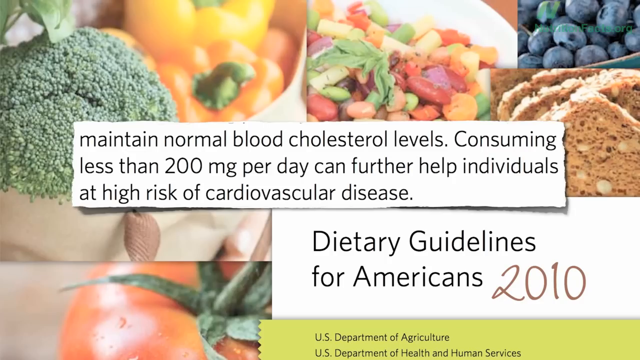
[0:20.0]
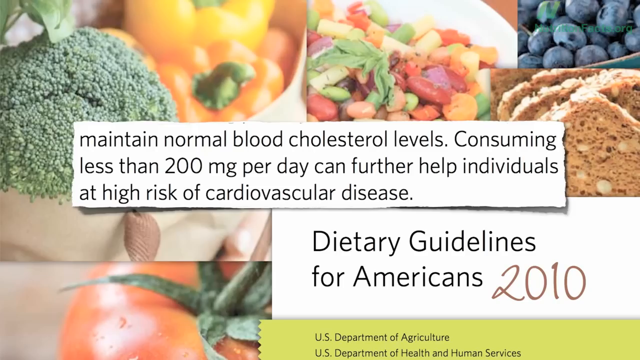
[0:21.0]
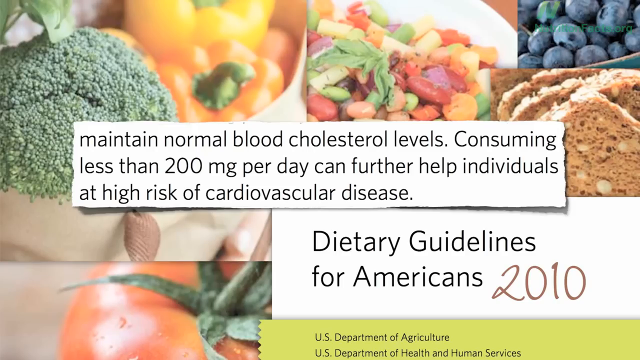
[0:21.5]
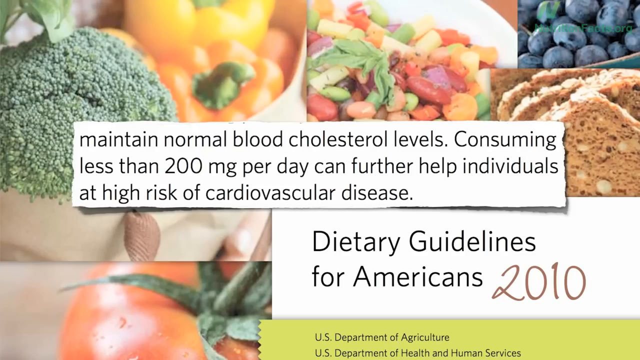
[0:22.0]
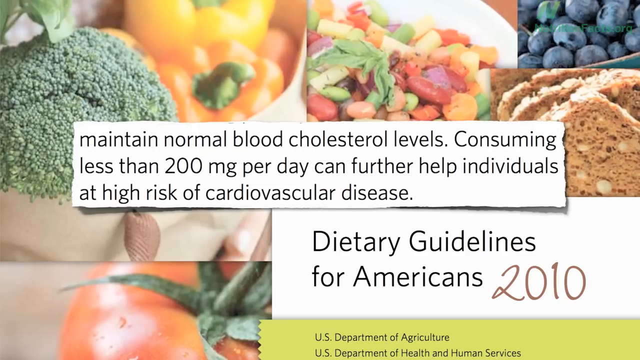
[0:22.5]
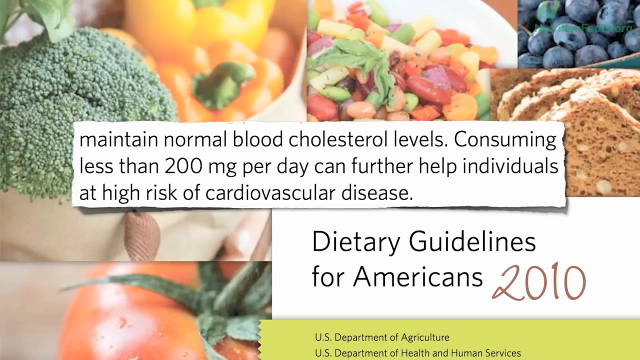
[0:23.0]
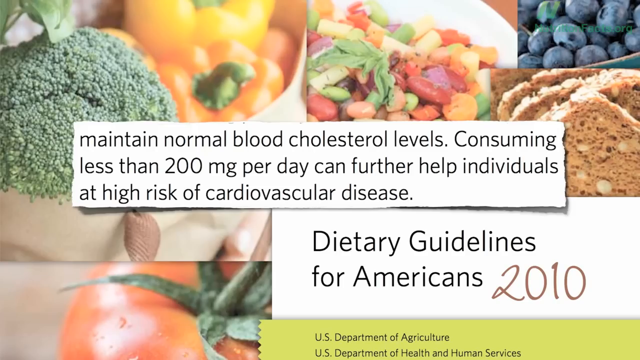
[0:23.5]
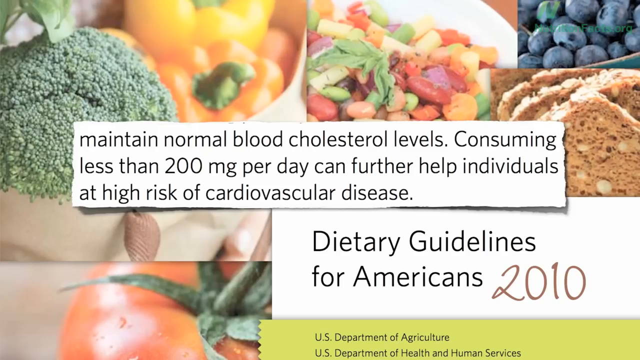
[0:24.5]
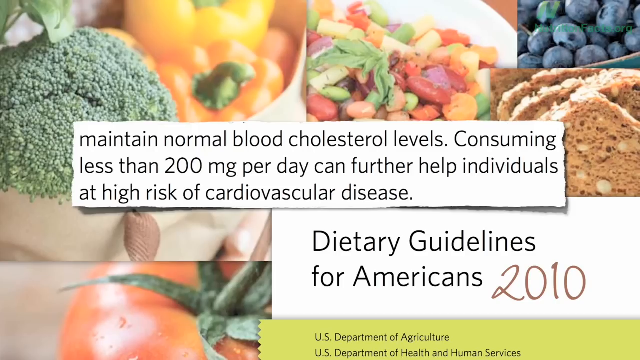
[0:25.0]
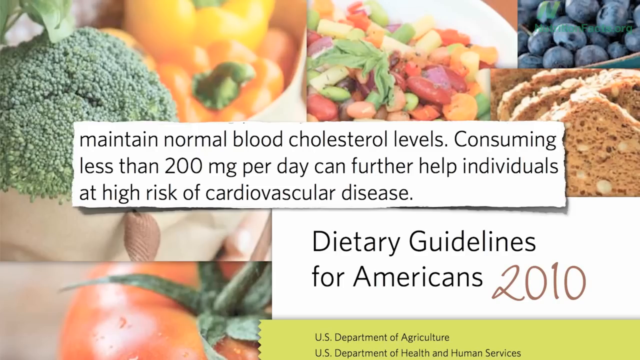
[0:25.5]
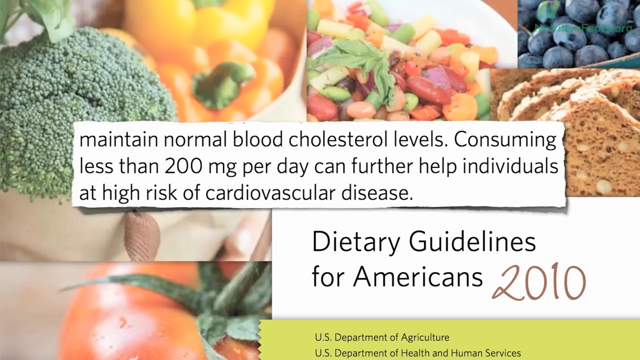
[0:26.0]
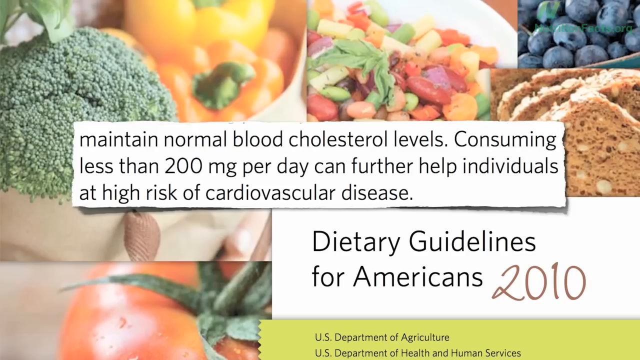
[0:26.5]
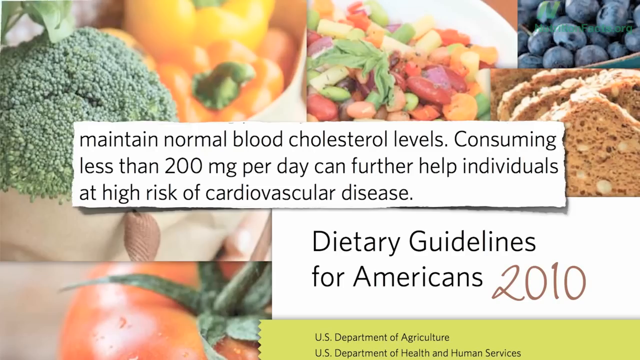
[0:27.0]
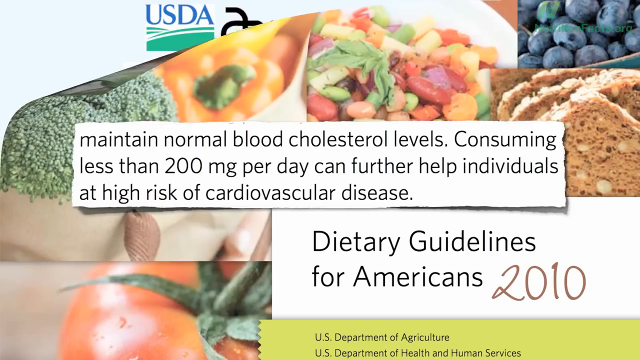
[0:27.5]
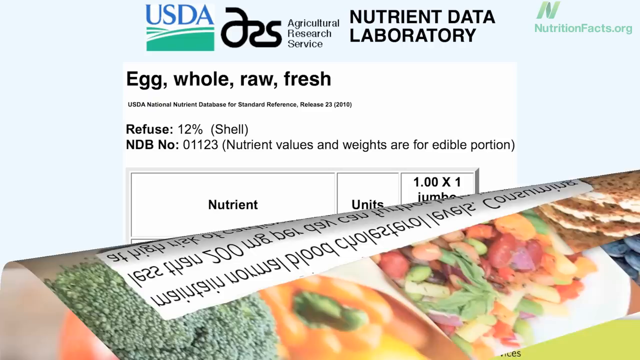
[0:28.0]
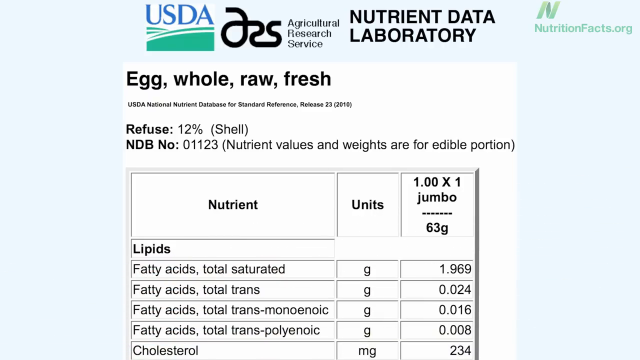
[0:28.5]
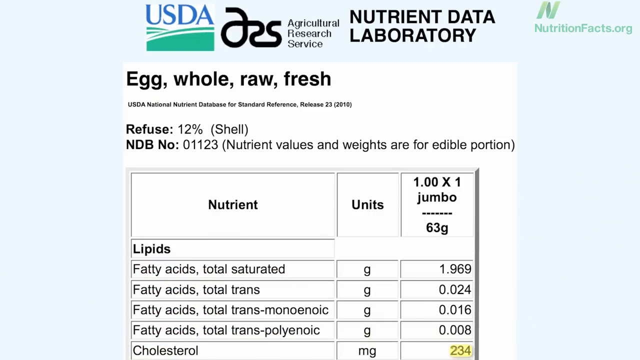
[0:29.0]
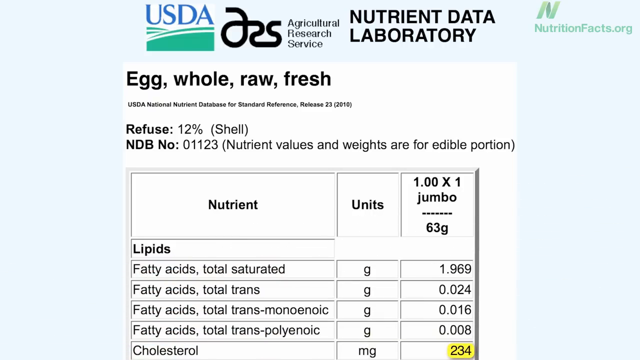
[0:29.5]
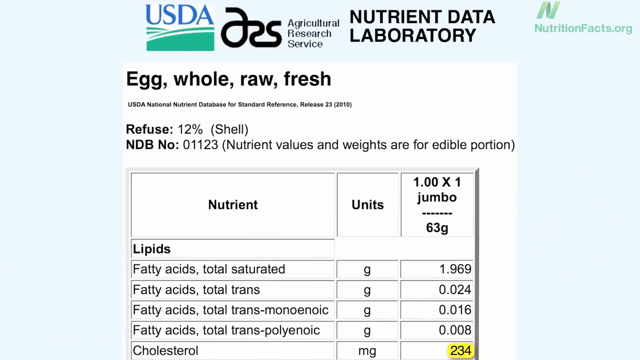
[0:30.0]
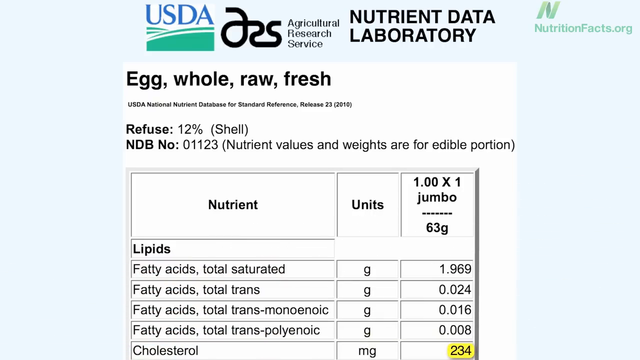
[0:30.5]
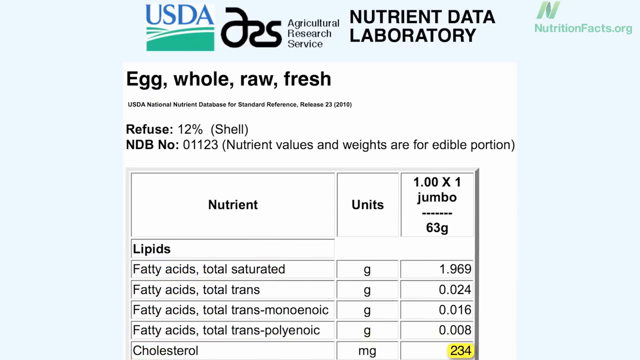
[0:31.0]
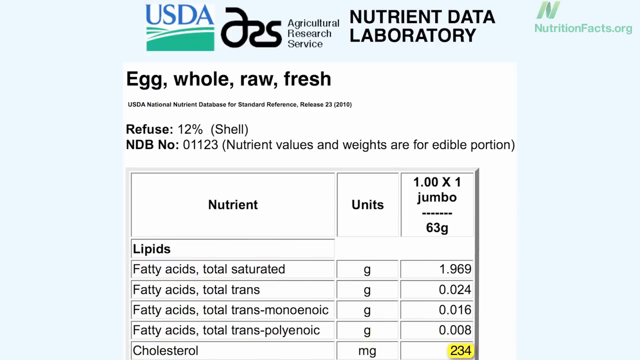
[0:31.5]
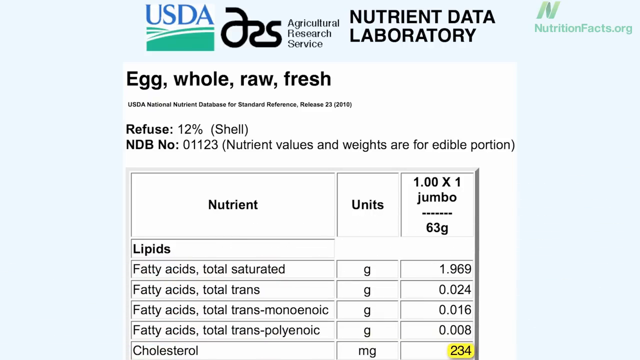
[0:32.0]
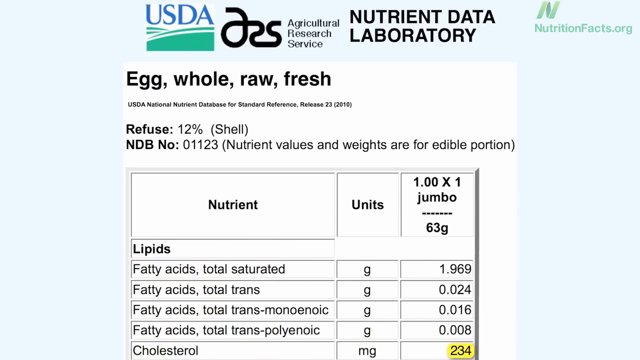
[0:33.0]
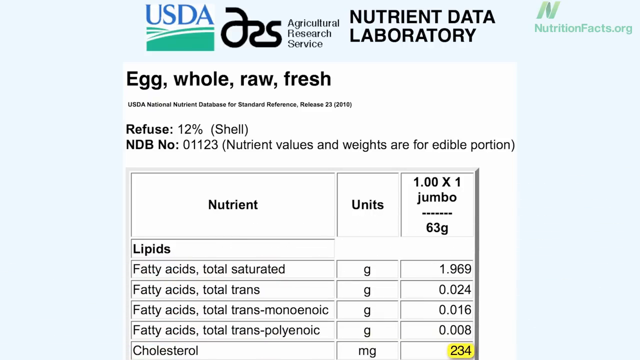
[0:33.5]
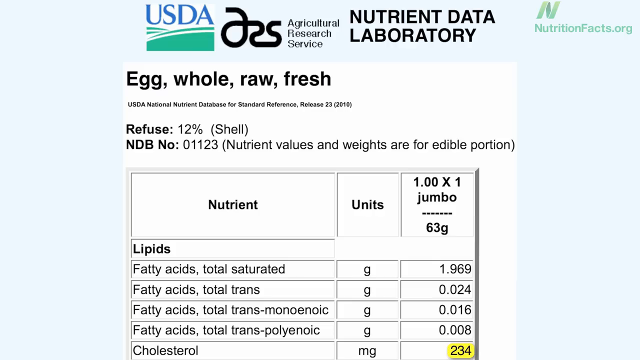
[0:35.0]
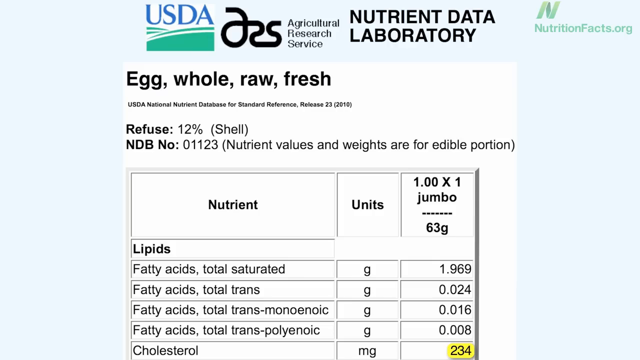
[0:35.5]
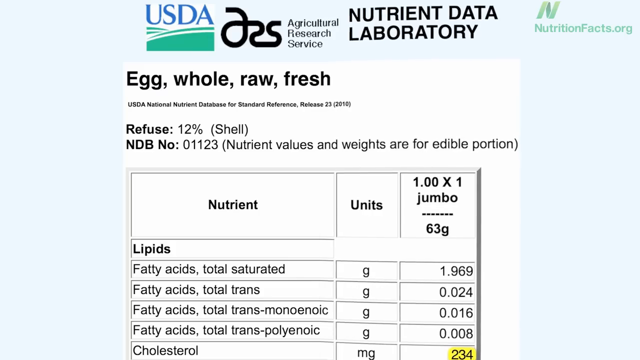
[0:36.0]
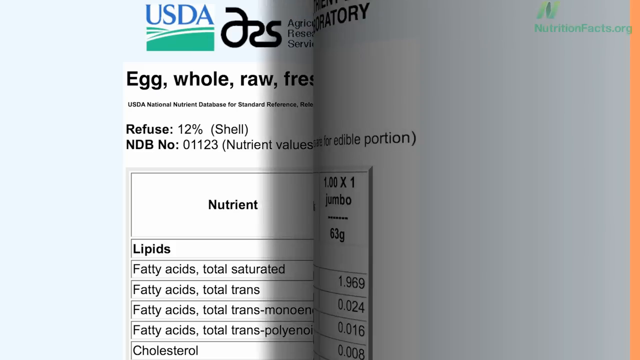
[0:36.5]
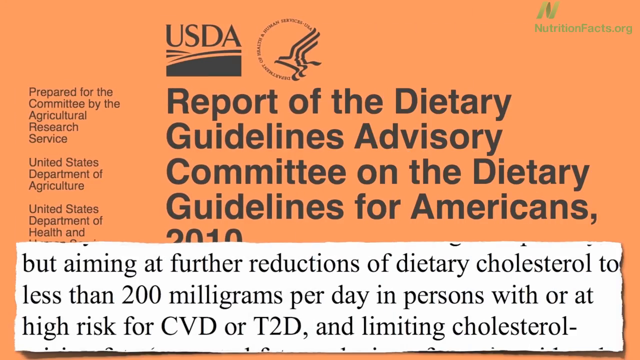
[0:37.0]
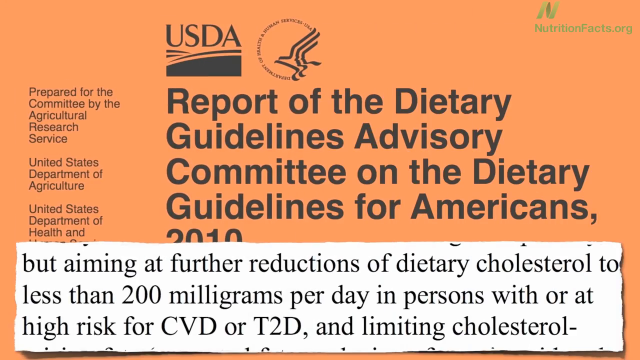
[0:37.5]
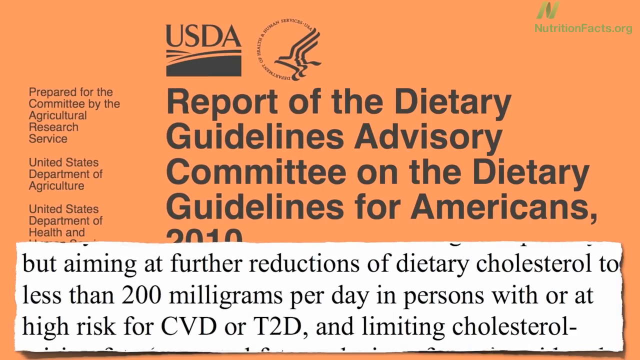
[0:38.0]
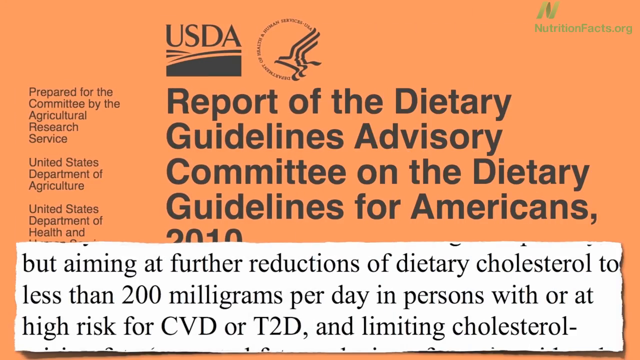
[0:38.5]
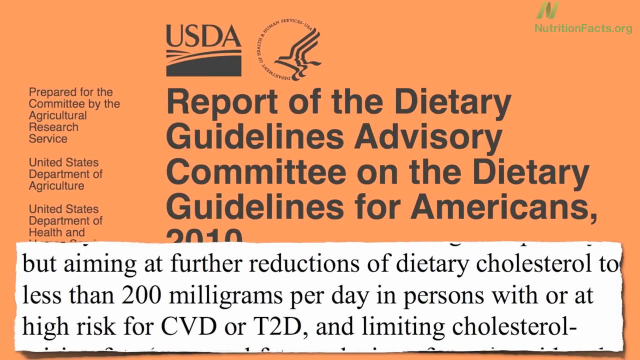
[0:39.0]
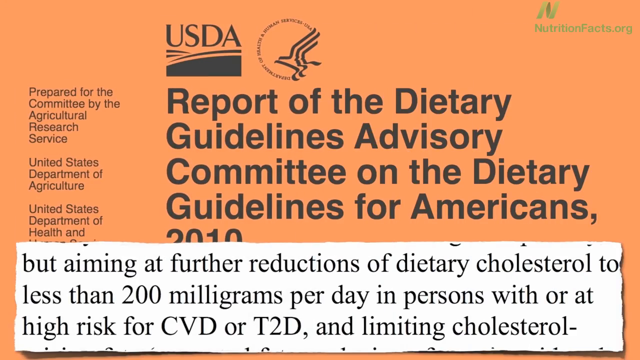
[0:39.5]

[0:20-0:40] The text "maintain normal blood cholesterol levels, consuming less than 200 mg per day can further help individuals at high risk of cardiovascular disease" stays on the screen. The image then transitions away by flipping down like a piece of paper, revealing a new image with information about eggs. It reads "USD" at the top, then "nutrient data laboratory, egg whole, raw, fresh", followed by a table, a graph, headed "nutrient units" with "lipids, fatty acids, and cholesterol" and grams for how much is in an egg. The figure of 234 mg of cholesterol in an egg is highlighted in yellow. That image flips like a book to the left, revealing a new image with an orange background and lots of text, reading "USDA, report of the Dietary Guideline Advisory Committee of the Dietary Guidelines for Americans 2010". At the bottom is something like a ripped piece of paper with text beginning "but aiming at further reductions of dietary cholesterol to less than 200 mg per day".